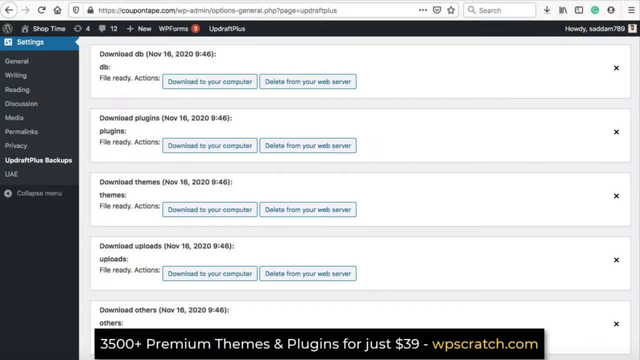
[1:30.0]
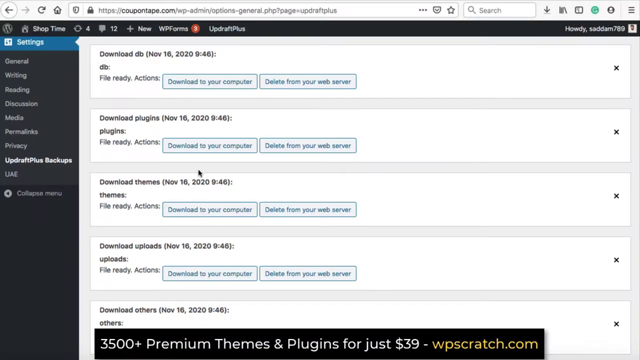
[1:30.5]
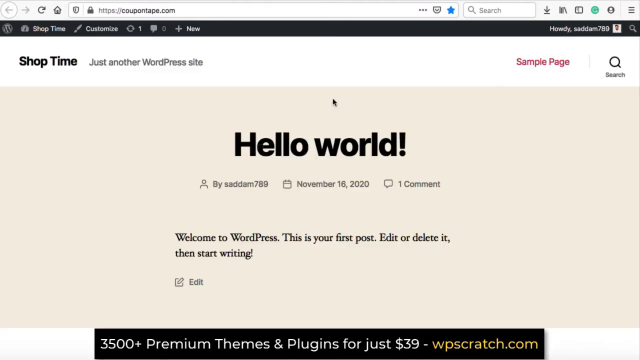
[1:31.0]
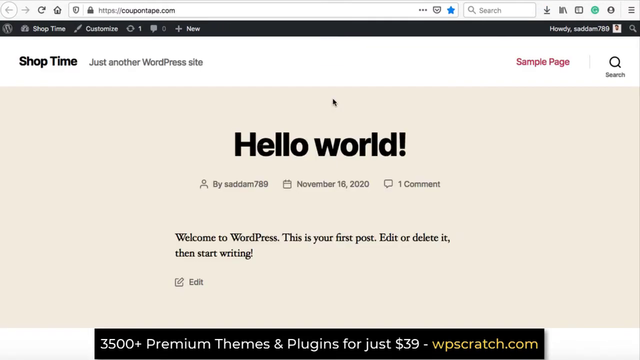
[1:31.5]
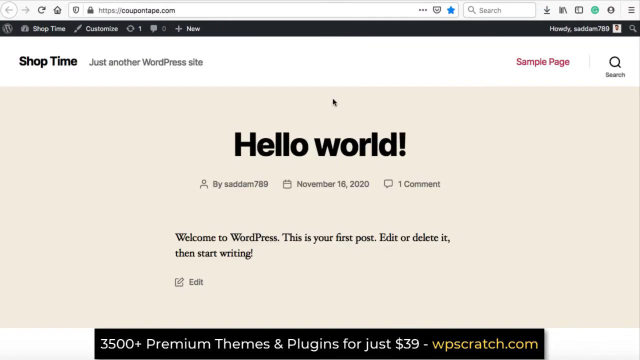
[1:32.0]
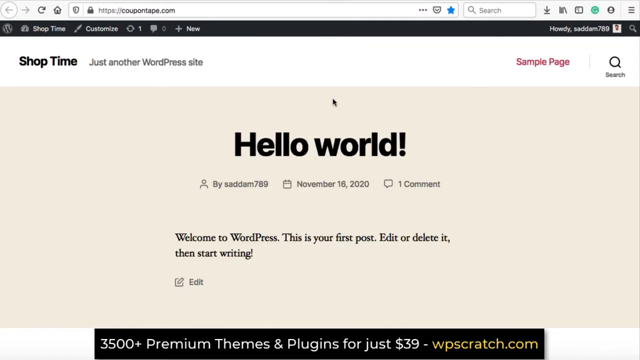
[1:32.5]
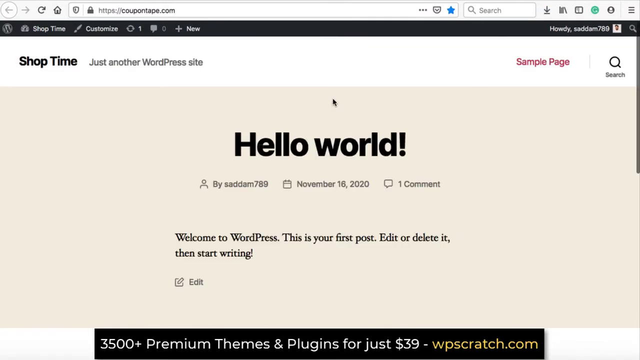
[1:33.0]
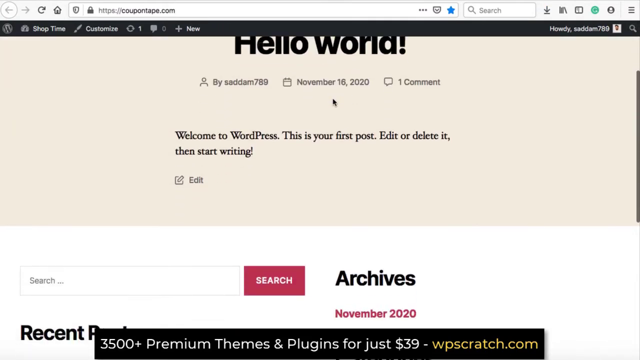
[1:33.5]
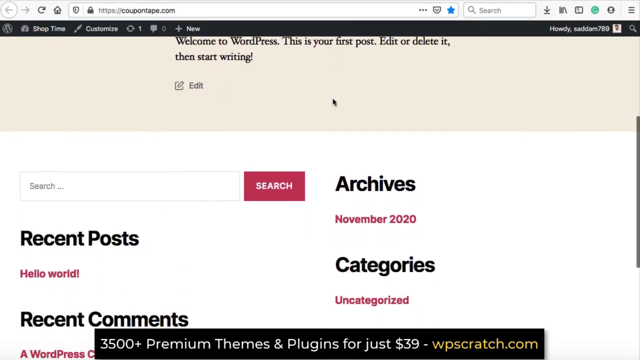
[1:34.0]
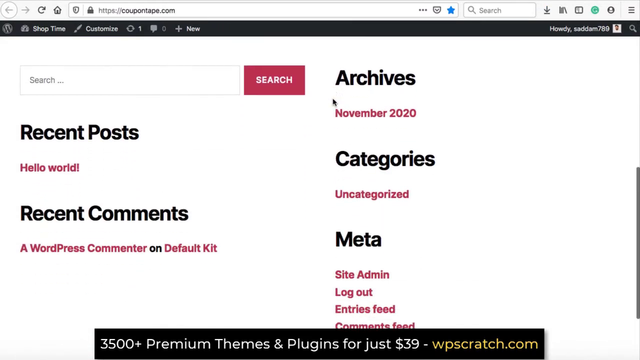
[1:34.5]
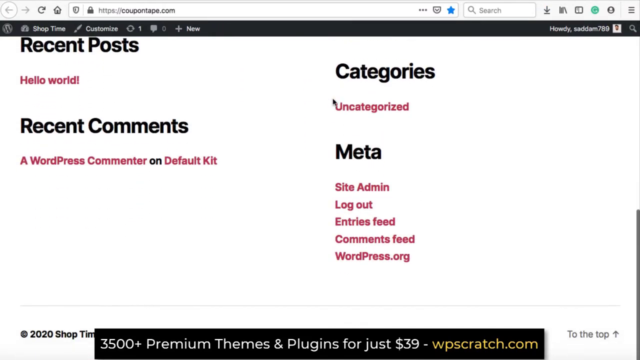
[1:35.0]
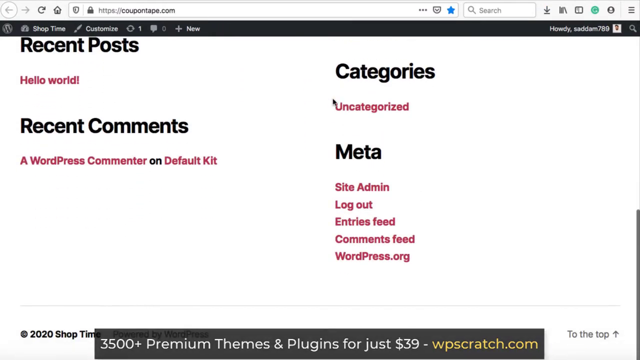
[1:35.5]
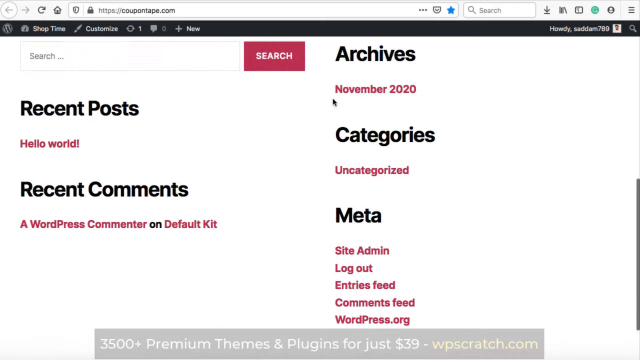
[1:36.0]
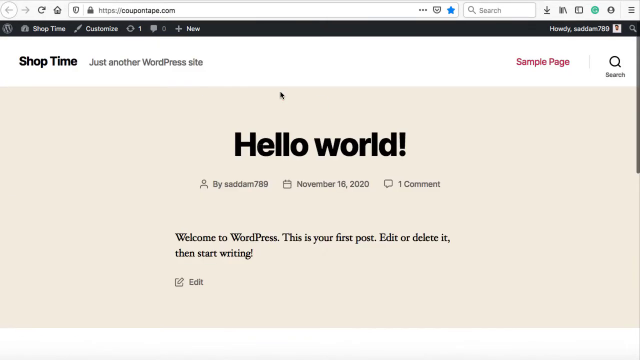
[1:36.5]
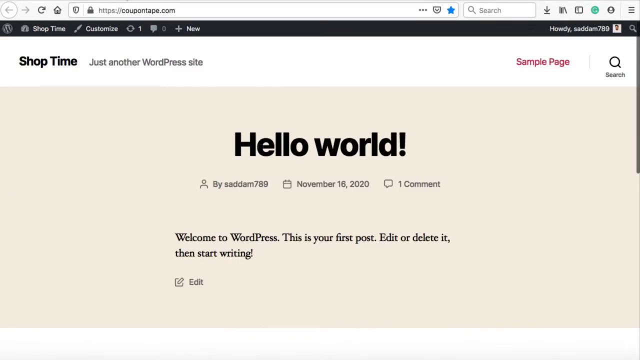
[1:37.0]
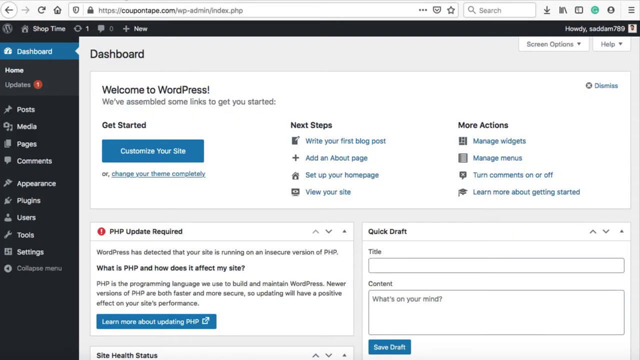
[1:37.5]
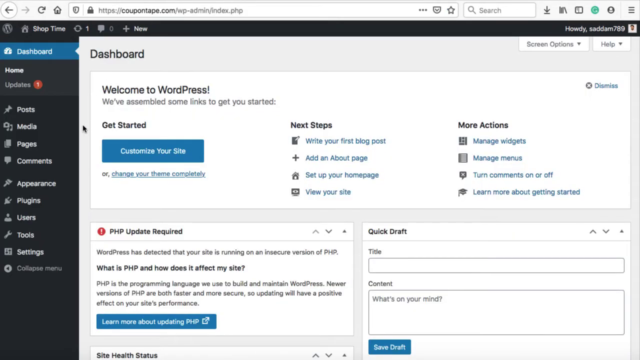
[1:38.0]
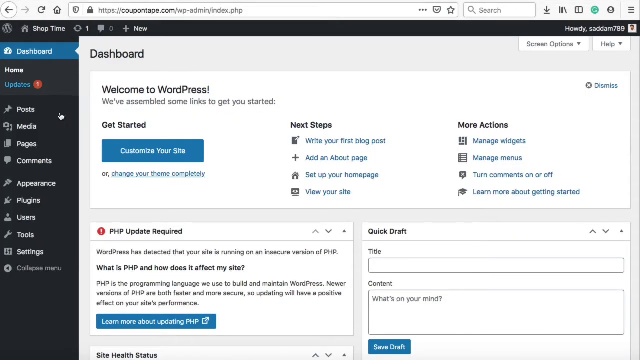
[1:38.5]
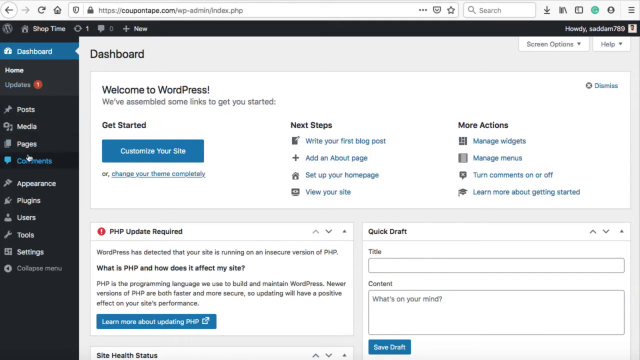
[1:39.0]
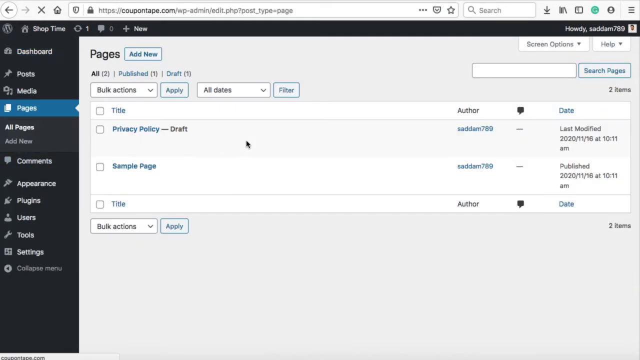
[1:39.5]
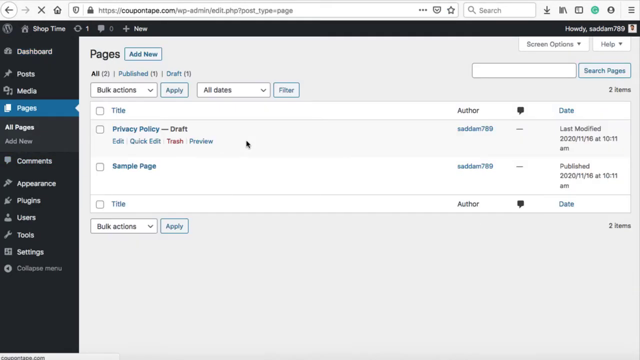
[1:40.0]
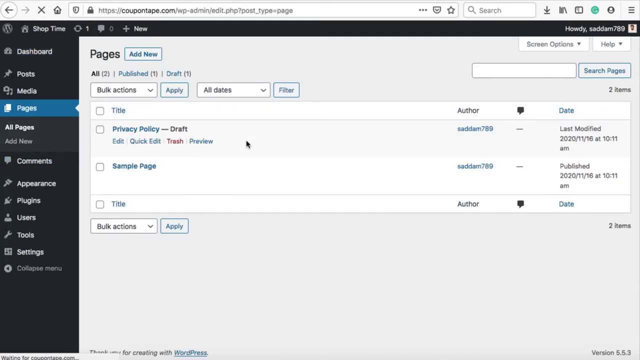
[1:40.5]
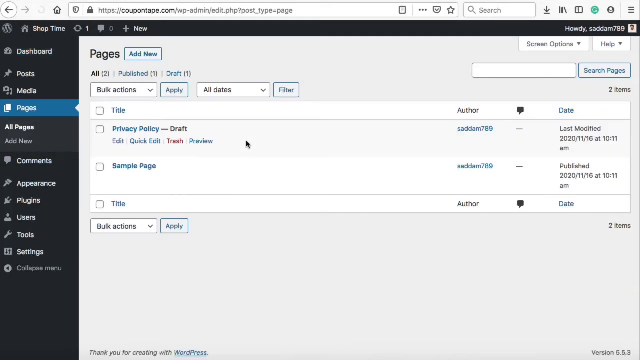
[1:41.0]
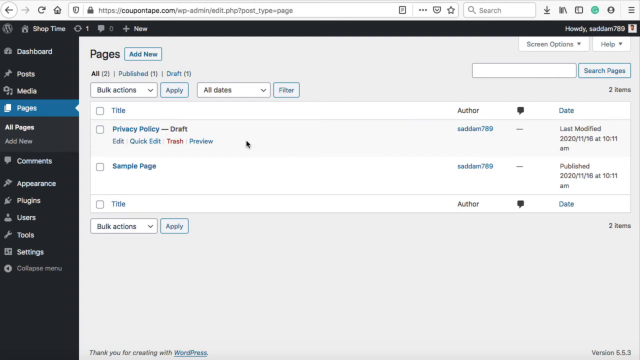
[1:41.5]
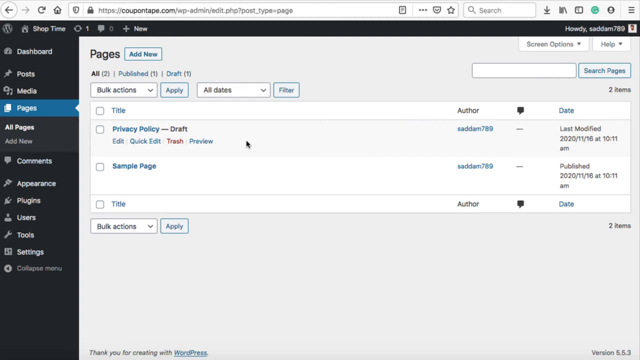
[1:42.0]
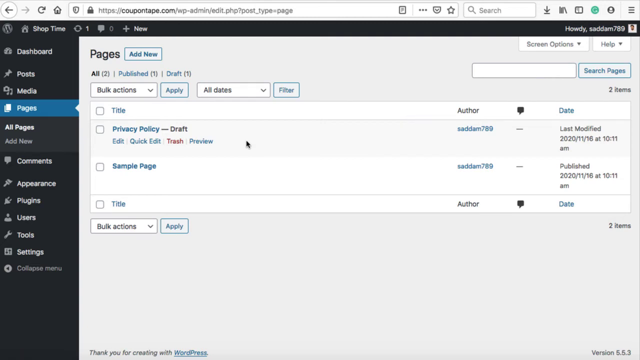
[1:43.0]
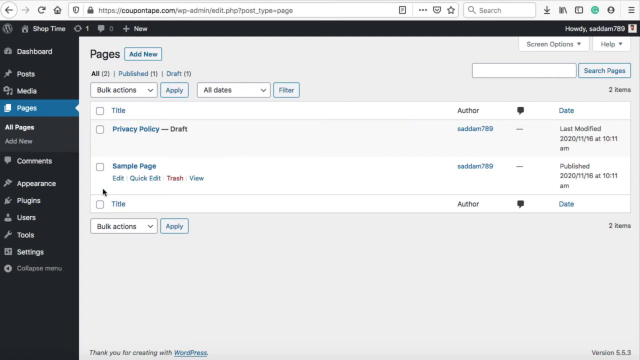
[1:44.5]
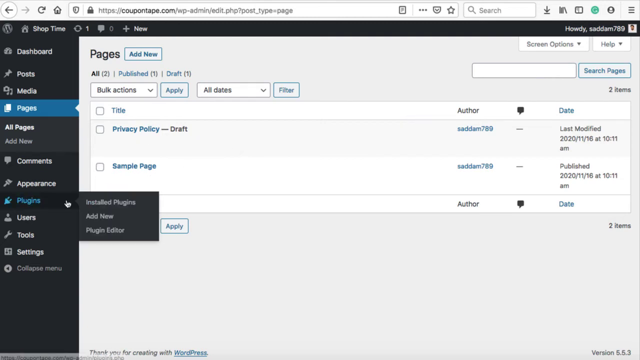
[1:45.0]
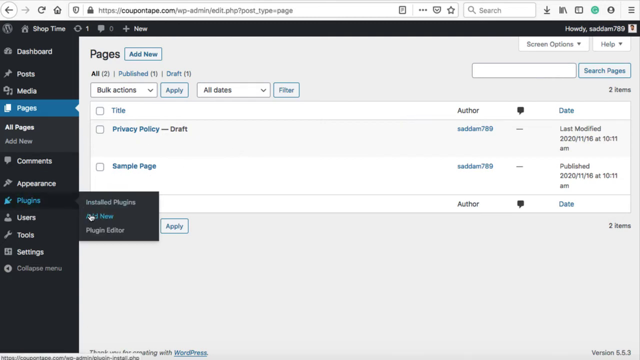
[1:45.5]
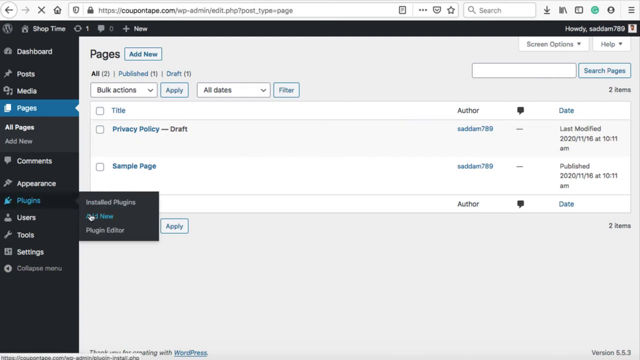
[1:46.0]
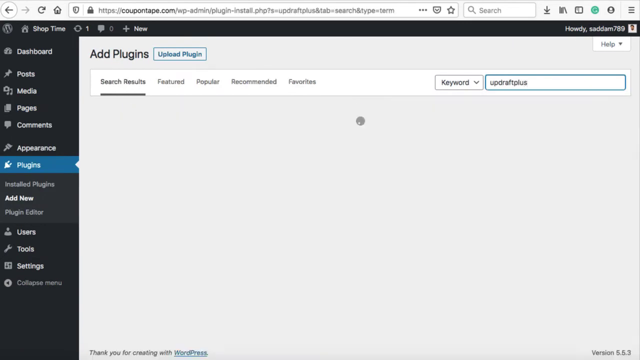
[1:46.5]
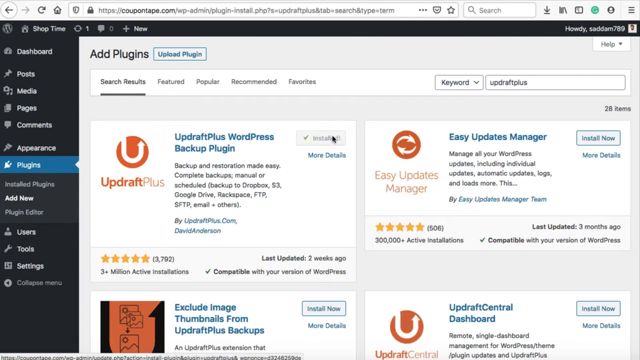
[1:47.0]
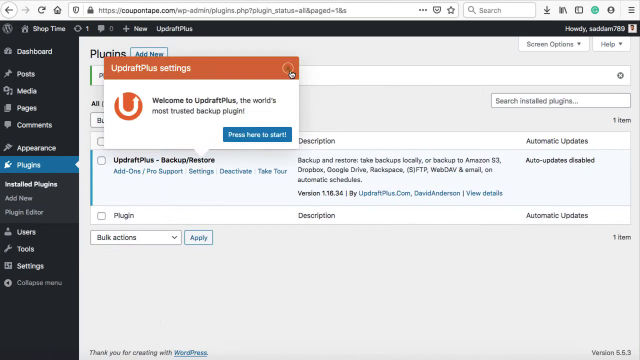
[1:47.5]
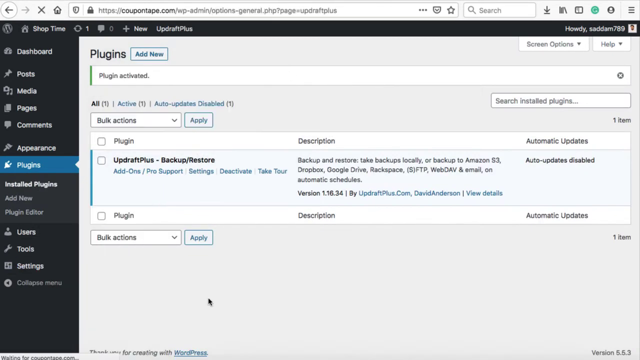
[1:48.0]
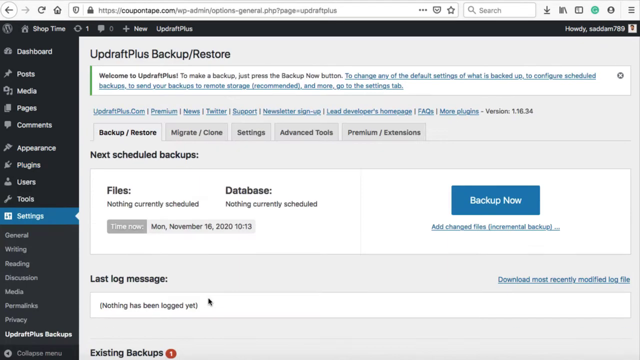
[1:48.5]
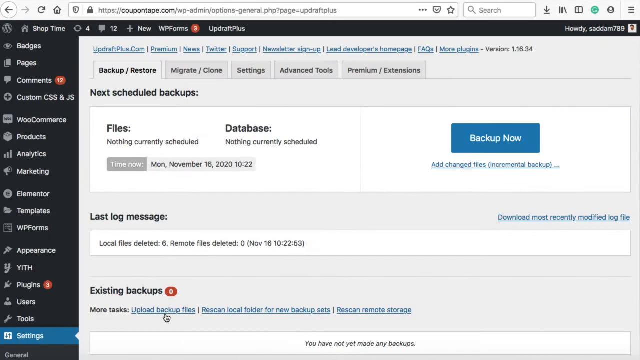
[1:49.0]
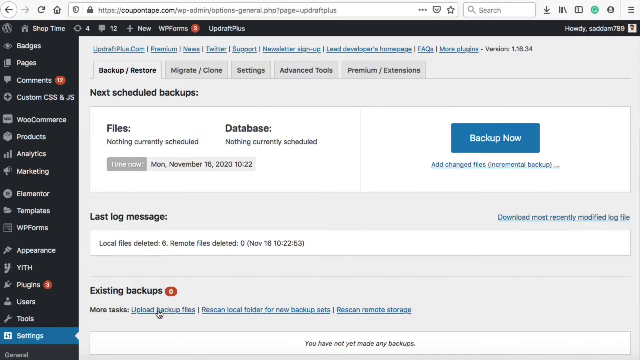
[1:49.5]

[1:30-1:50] A WordPress dashboard shows a list of downloadable files, including themes, uploads, and plugins. The screen changes to the store's front page, with "Shop Time" in bold black letters in the top-left corner and "just another WordPress site" in gray next to the title. On the right, "sample page" appears in red, with a search icon further right. In the middle of the page, "Hello World" appears in large black text, and the blog post says "Welcome to WordPress. This is your first post. Edit or delete it, and start writing." There is also a username, a date, and "one comment." The person scrolls down to more links at the bottom, with more headers in bold black text such as recent posts, recent comments, categories, and meta; some clickable text appears in red on a white background. The person clicks back to the dashboard and opens Pages, which lists two pages, Privacy Policy and Sample Page, while the cursor hovers on the screen. They then click Plugins, click Add New, and add a plugin, all moving very rapidly, before going back to the backups. The dashboard sidebar is dark blue with white and gray text, and the main page is white and gray.